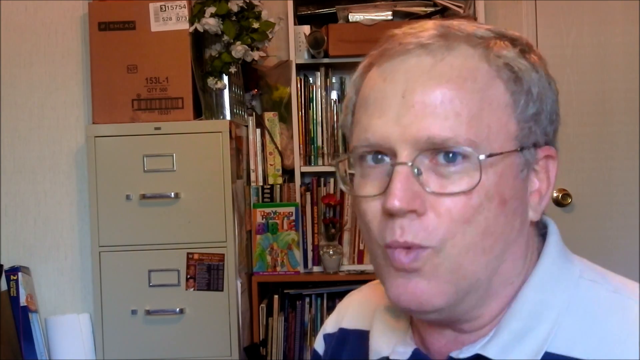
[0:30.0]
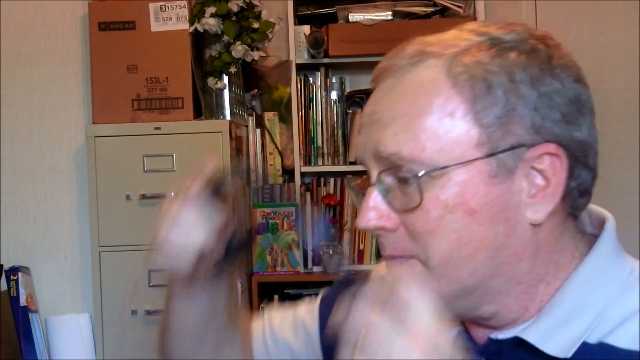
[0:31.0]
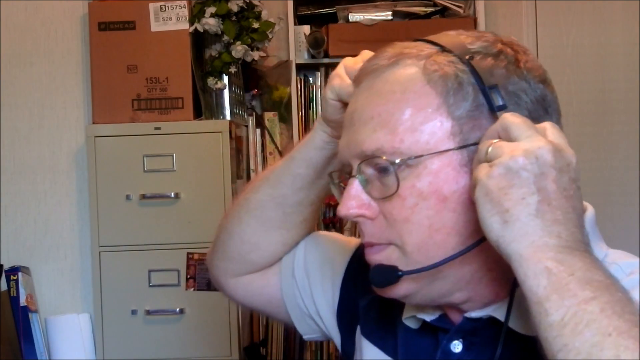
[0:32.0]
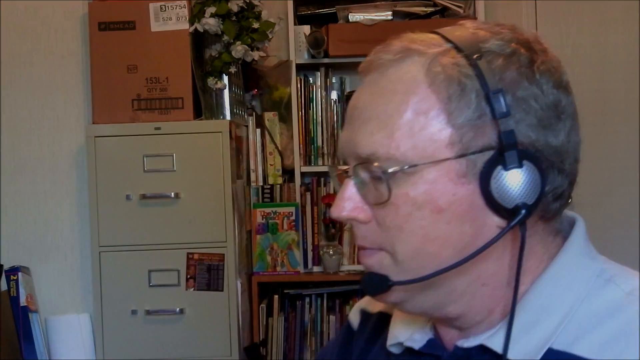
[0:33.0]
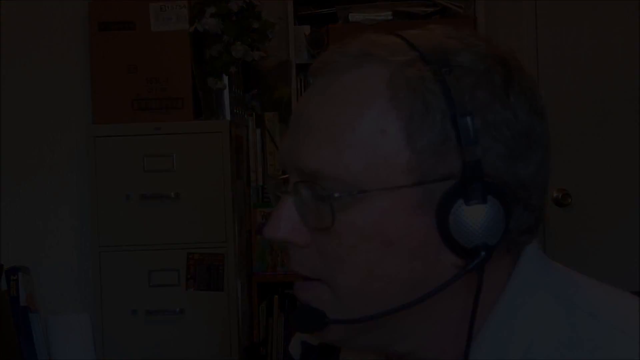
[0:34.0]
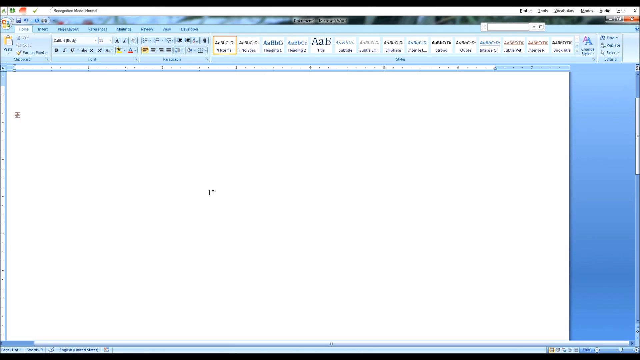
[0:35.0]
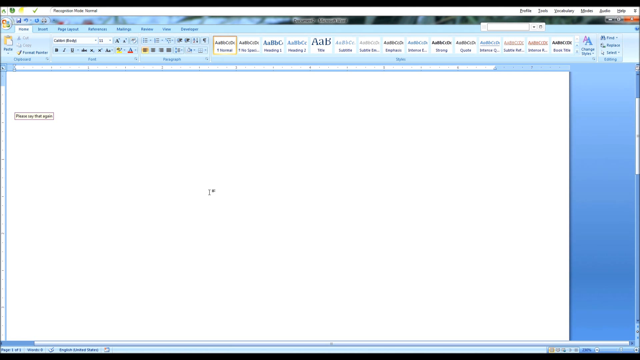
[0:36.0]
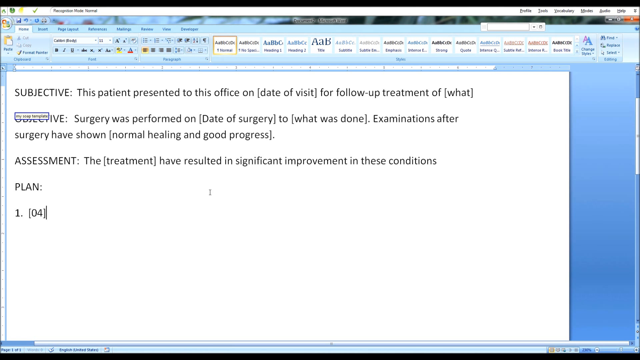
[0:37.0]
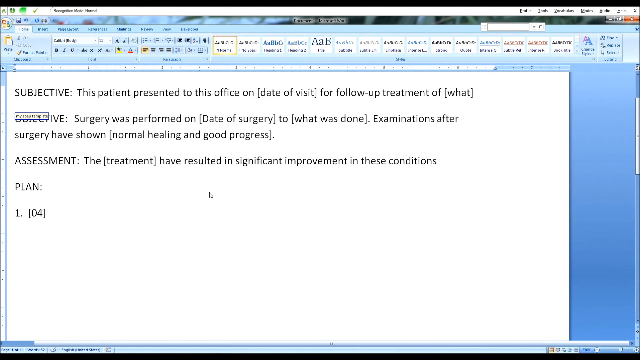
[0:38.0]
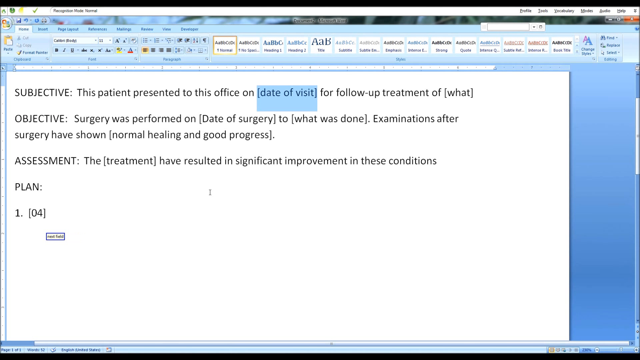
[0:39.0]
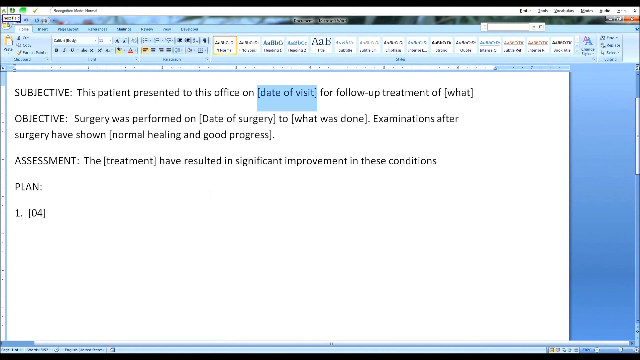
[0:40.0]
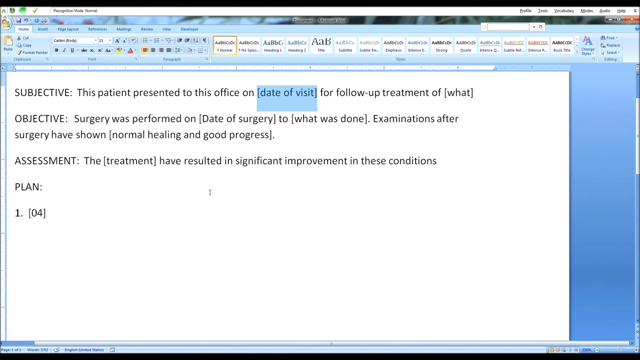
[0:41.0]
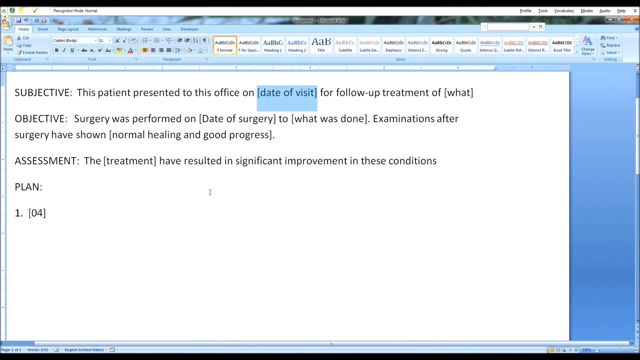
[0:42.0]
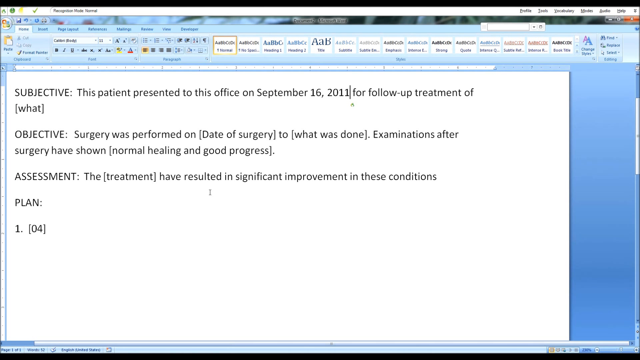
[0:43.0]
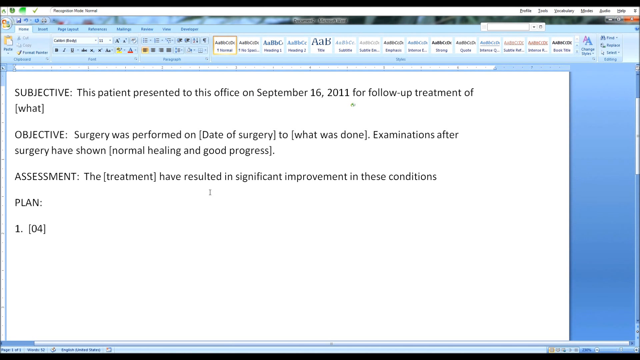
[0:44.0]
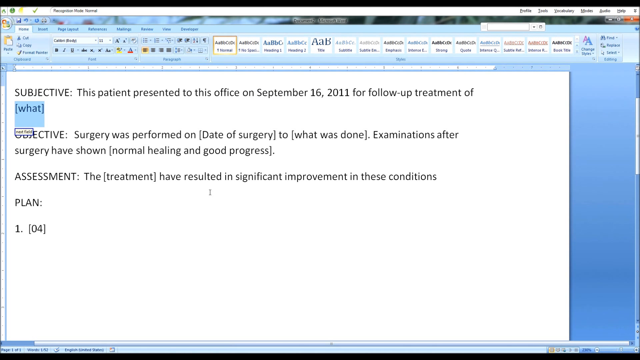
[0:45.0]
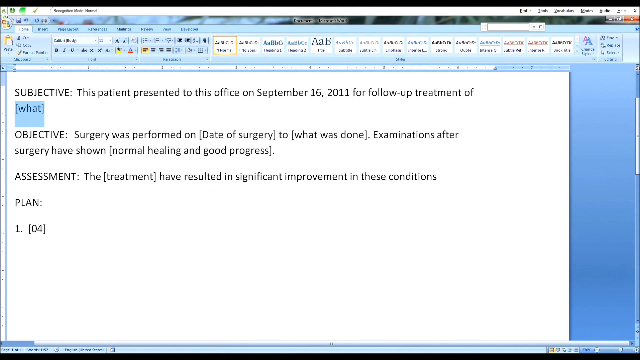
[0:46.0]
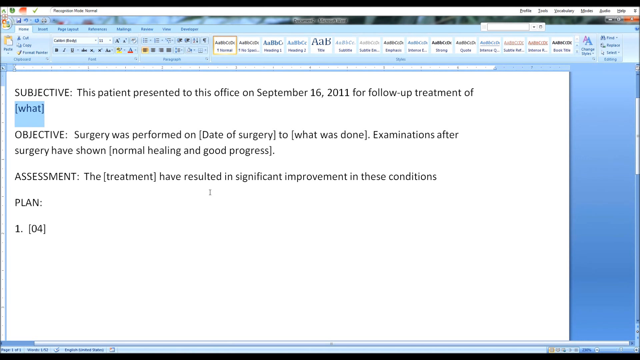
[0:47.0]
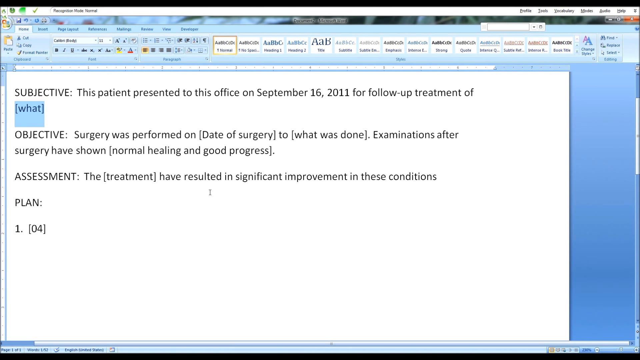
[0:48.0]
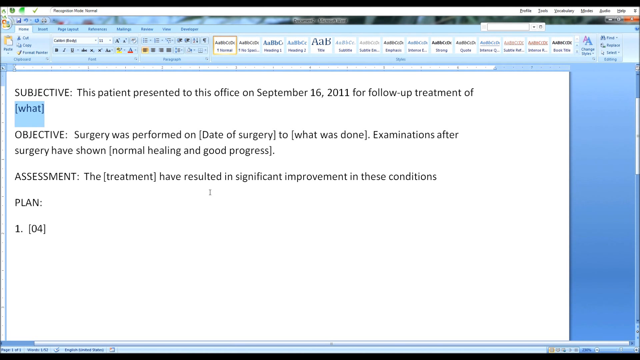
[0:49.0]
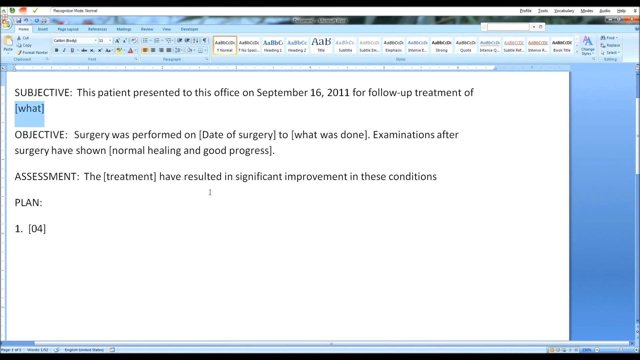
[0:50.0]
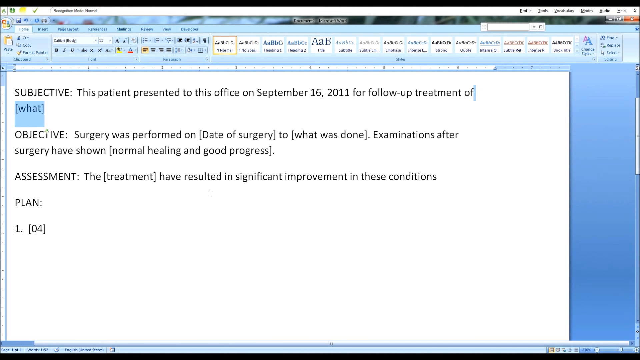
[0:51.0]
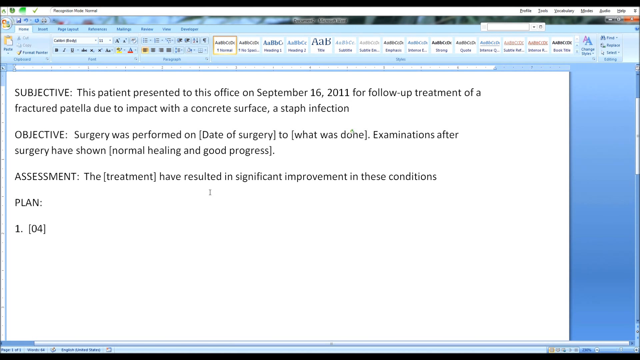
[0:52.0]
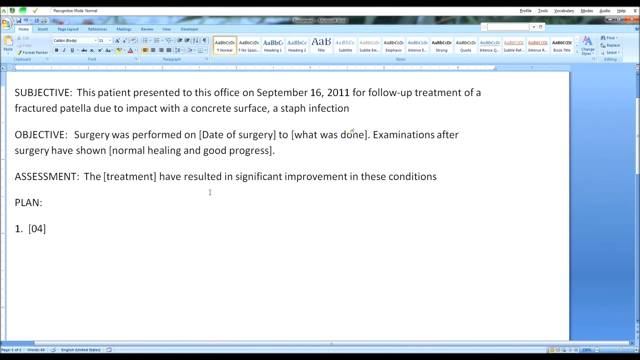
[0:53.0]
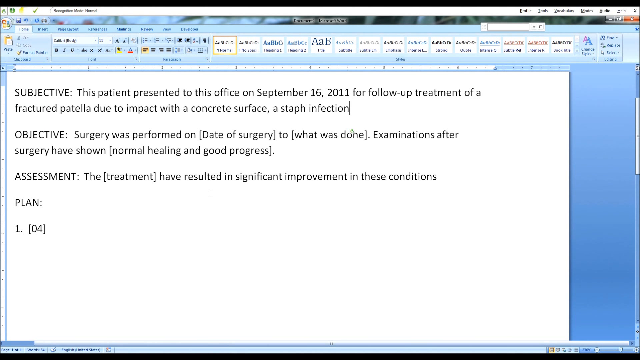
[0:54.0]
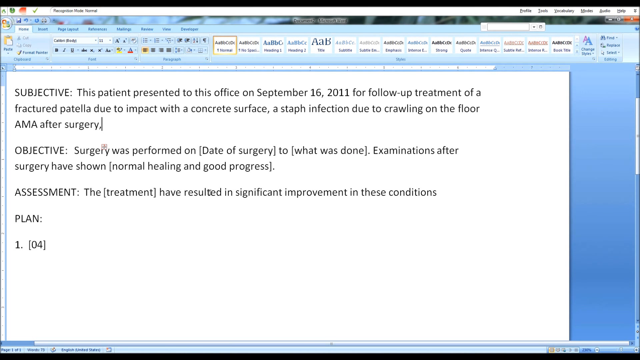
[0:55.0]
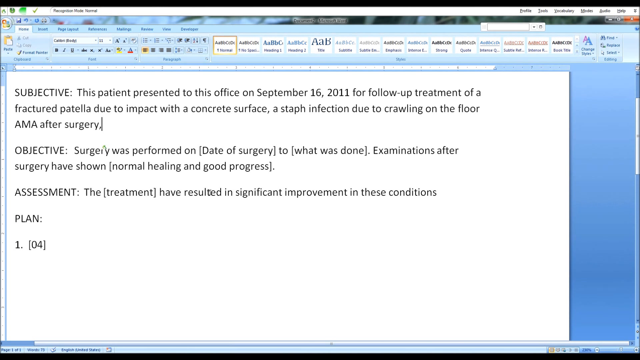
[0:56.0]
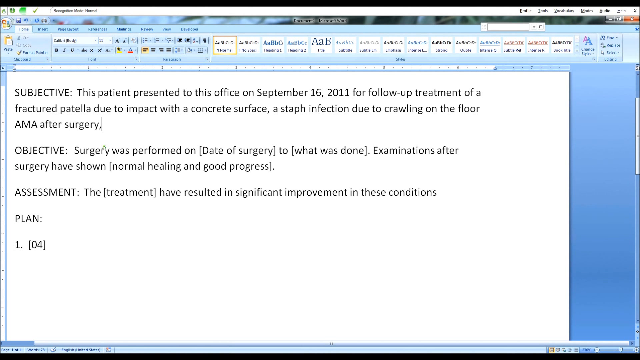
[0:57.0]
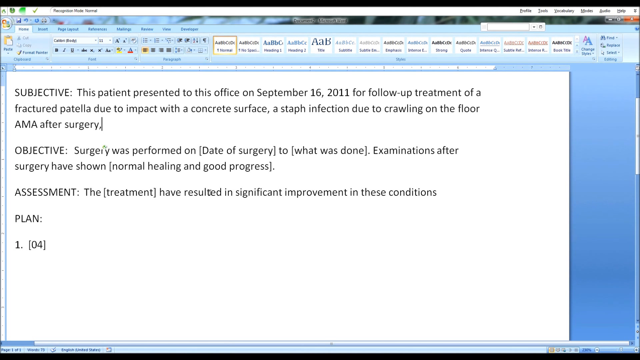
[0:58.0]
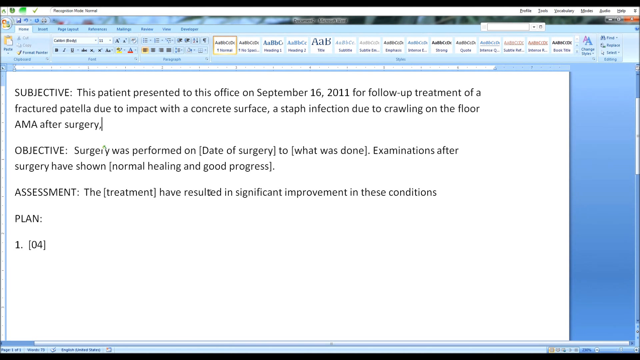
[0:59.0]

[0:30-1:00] A man sitting in a somewhat cluttered office speaks directly into the camera, seated on the right side of the screen. His mouth appears to say "Watch this" as he turns his head toward the center of the screen and looks down at something. He picks up a headset with both hands, grabbing each side, and places it on his ears. A small microphone attached to the headset moves across and in front of his mouth on the left side of his face. He adjusts the headset and puts his hands down out of frame, his face now pointing downward. The scene fades to black and reveals a computer desktop with a writing program open. A cursor appears at the beginning of the page and blinks slowly. It disappears, and an already written page outlining a patient plan appears, with areas of text and descriptions under the categories Subjective, Objective, Assessment and Plan. The text "date of visit" is highlighted in blue and disappears as "September 16th, 2011" is typed in. The word "what" is then highlighted in blue, and text is entered reading "fractured patella due to impact with a concrete surface, a staph infection due to crawling on the floor AMA after surgery". The page has black text on a white background and appears to be a Microsoft program resembling Word. The entire screen of the program is shown while typing happens; the man is not shown, though he is presumably the one typing.